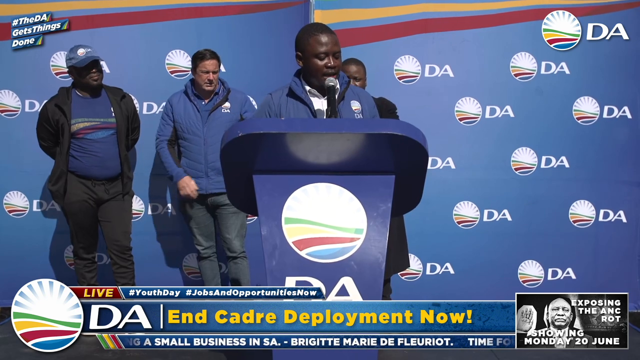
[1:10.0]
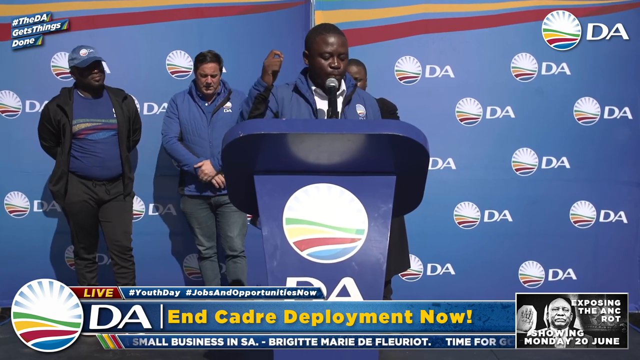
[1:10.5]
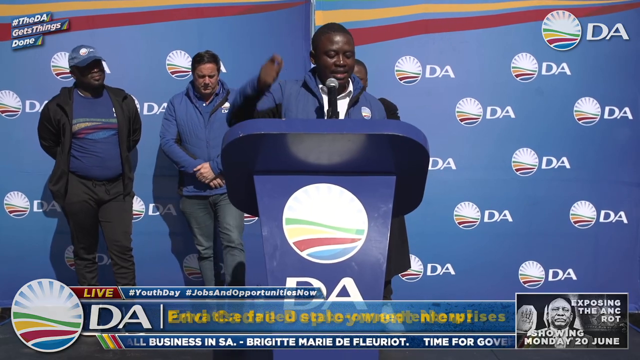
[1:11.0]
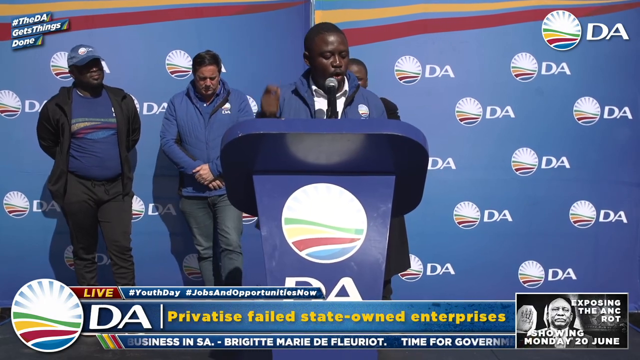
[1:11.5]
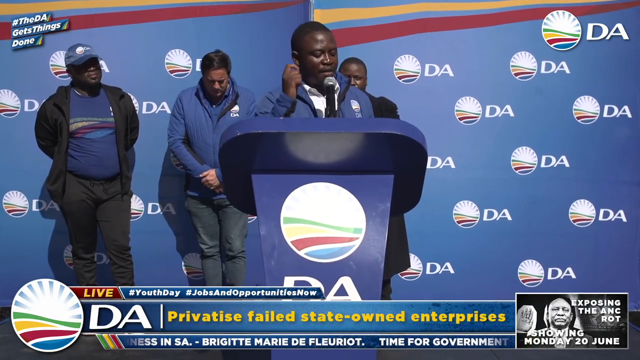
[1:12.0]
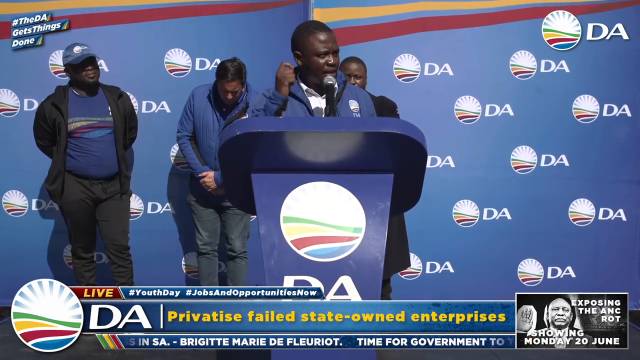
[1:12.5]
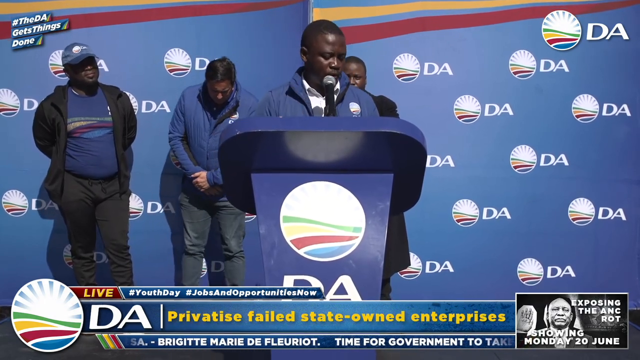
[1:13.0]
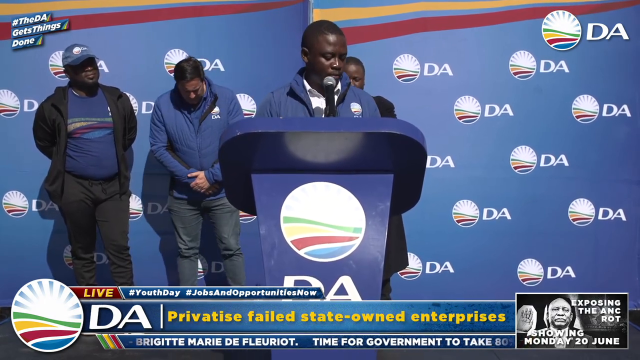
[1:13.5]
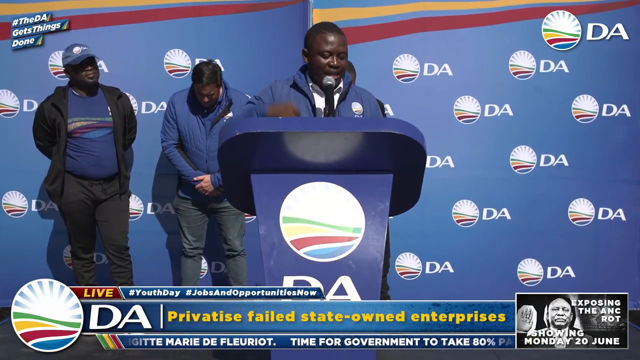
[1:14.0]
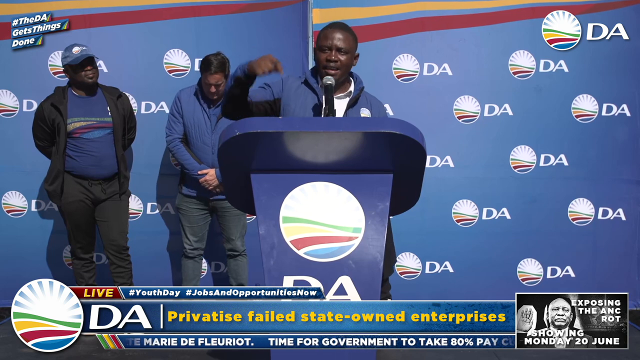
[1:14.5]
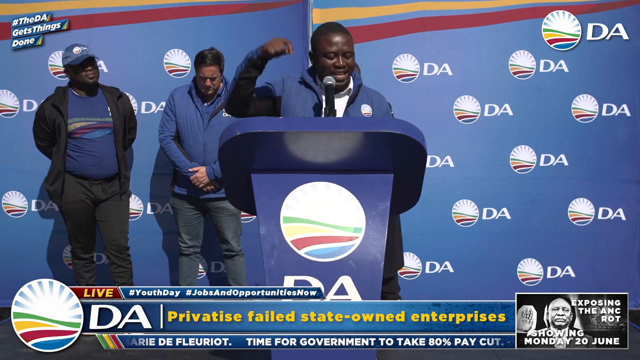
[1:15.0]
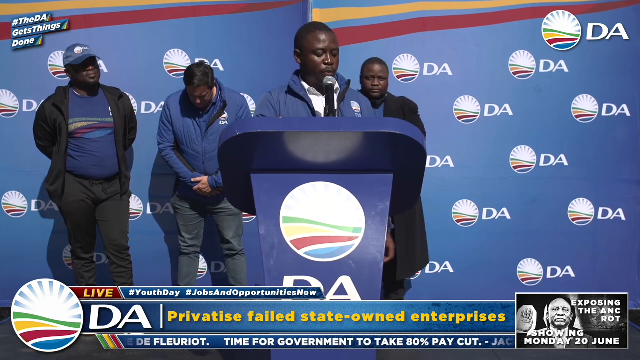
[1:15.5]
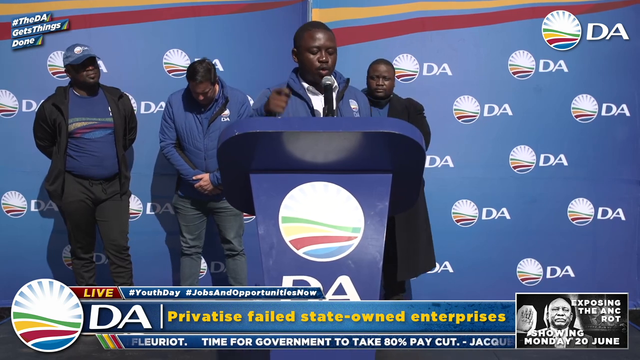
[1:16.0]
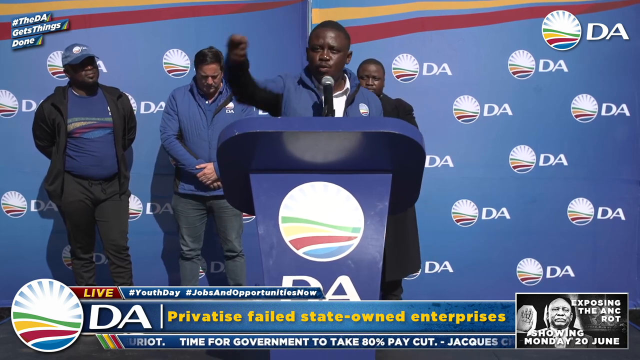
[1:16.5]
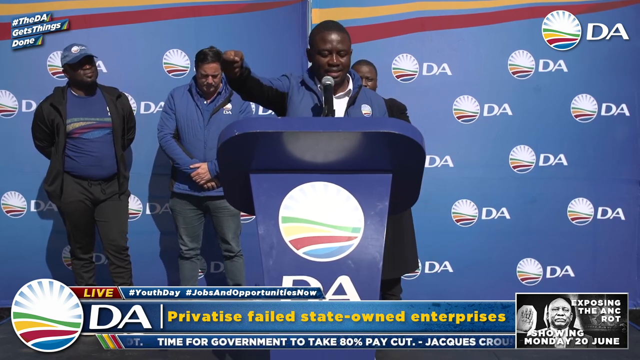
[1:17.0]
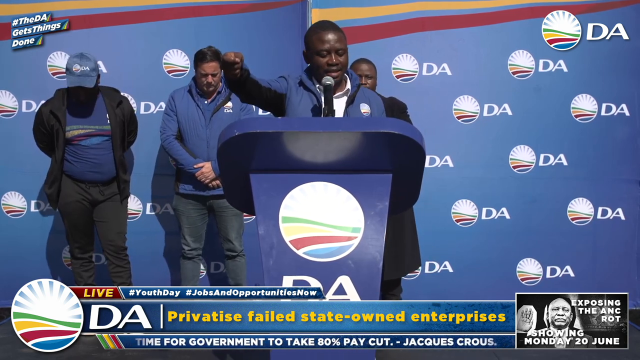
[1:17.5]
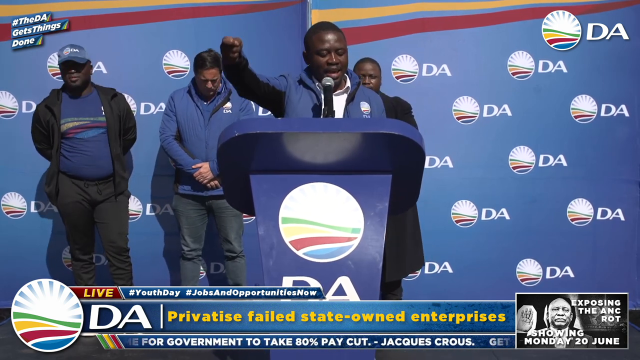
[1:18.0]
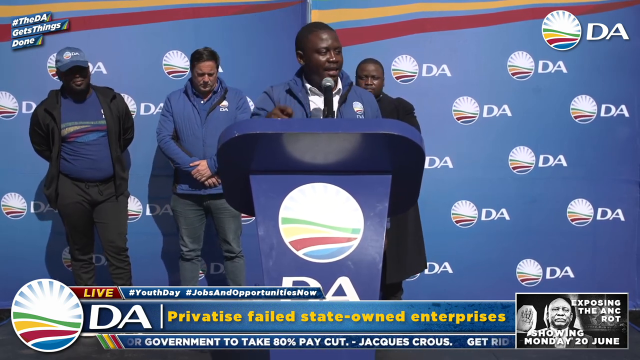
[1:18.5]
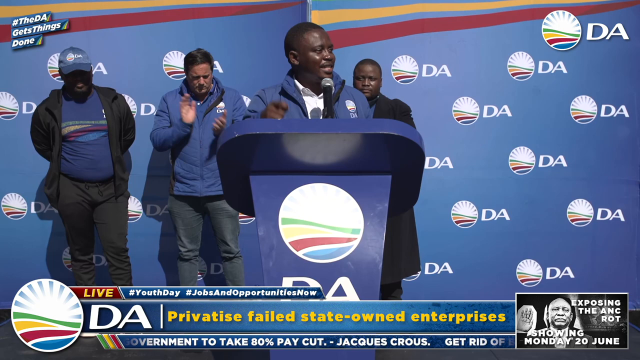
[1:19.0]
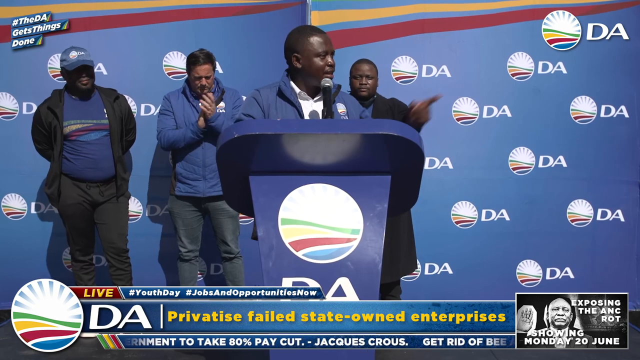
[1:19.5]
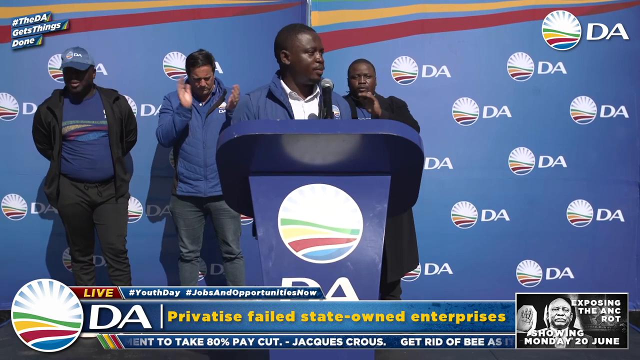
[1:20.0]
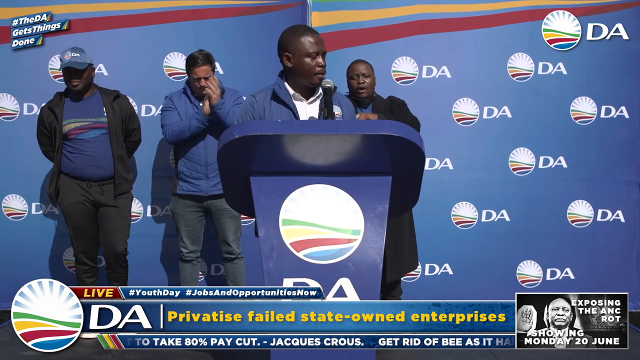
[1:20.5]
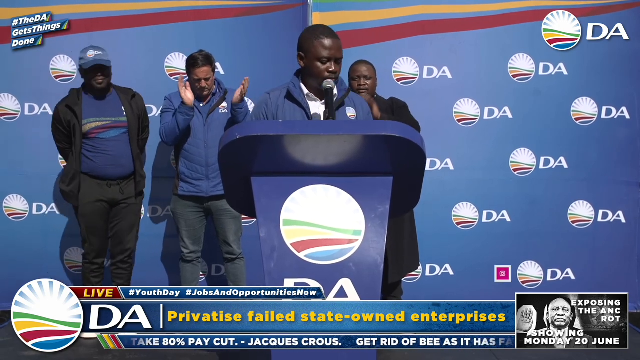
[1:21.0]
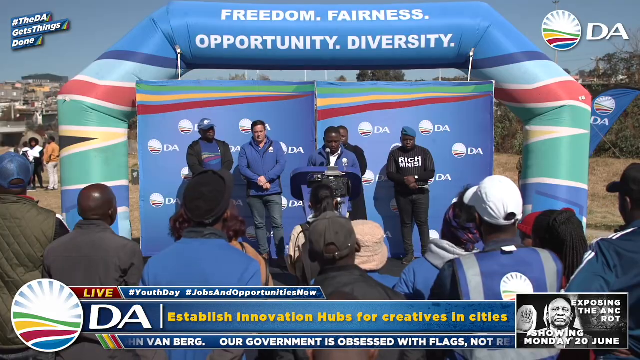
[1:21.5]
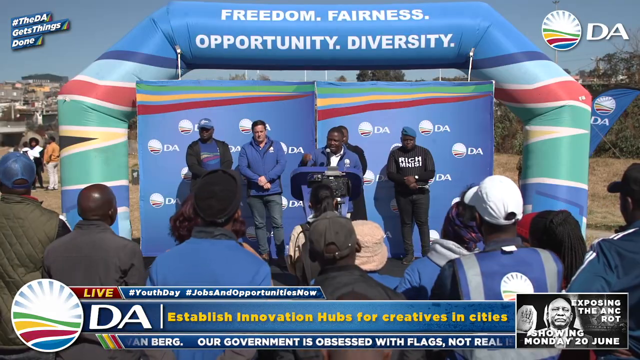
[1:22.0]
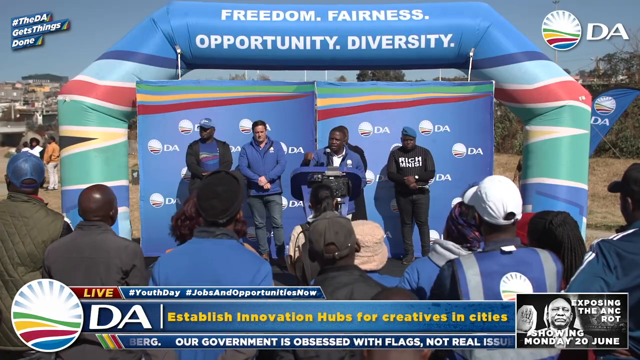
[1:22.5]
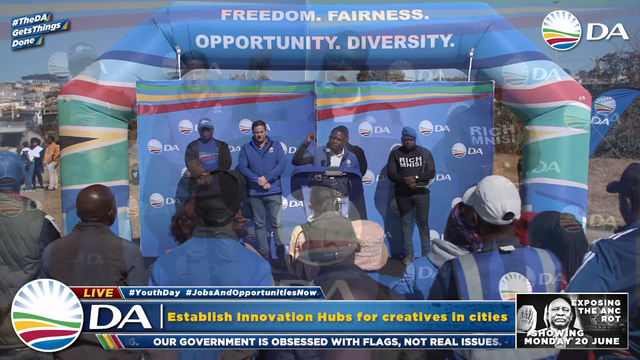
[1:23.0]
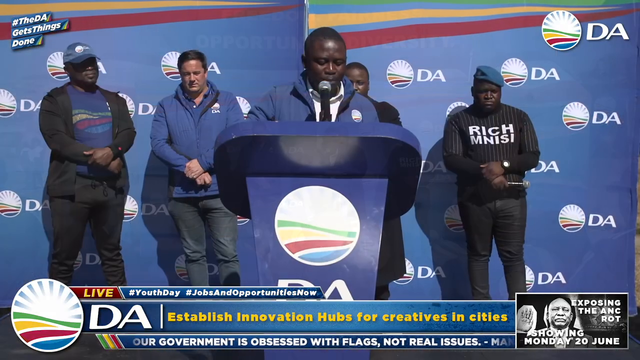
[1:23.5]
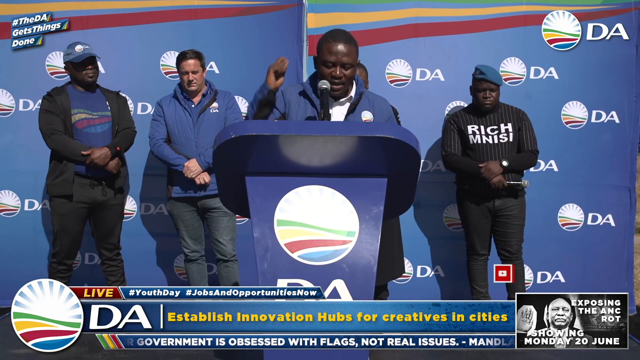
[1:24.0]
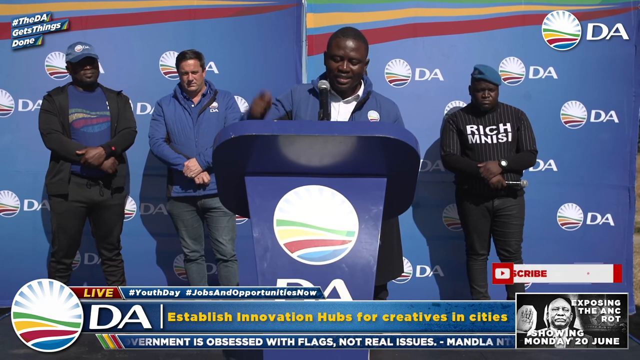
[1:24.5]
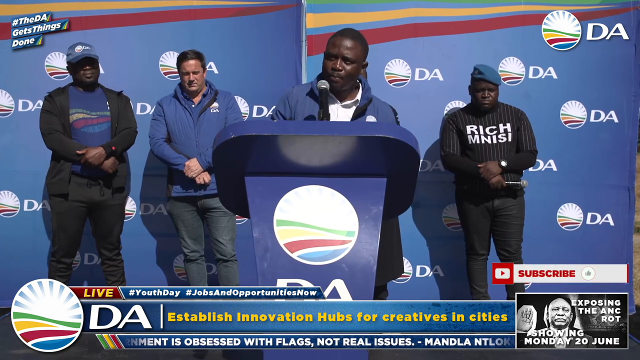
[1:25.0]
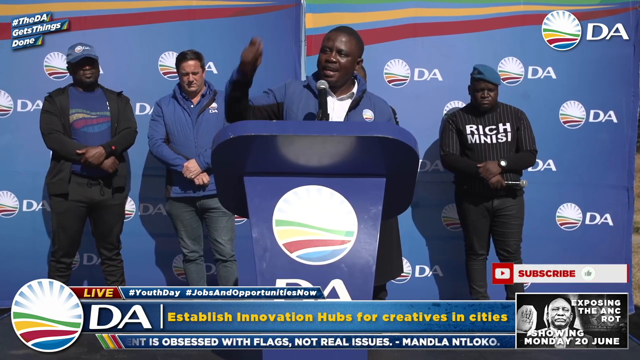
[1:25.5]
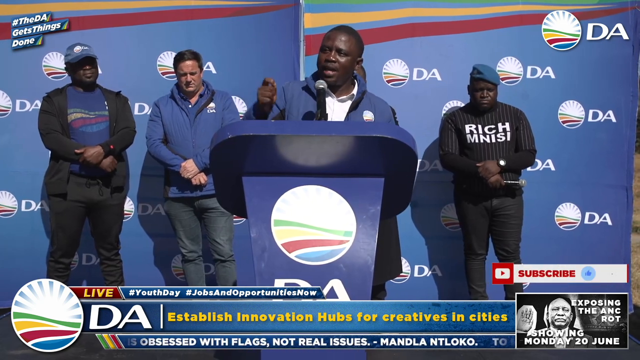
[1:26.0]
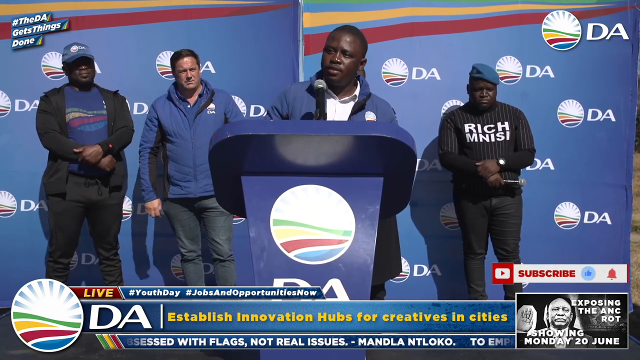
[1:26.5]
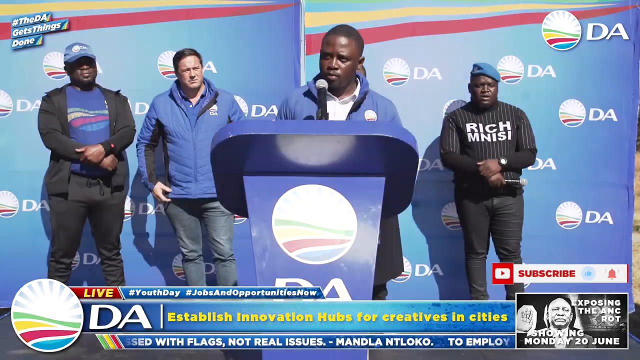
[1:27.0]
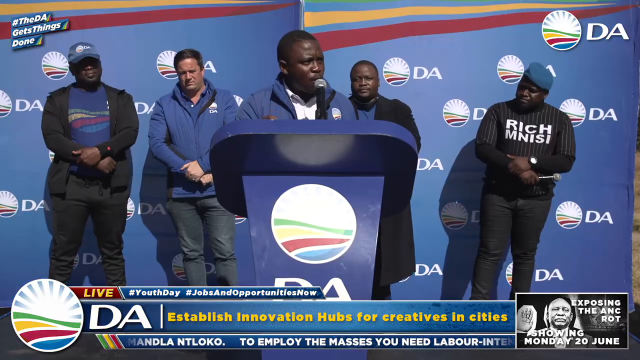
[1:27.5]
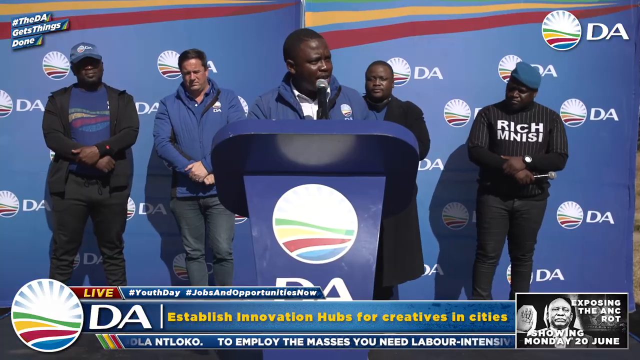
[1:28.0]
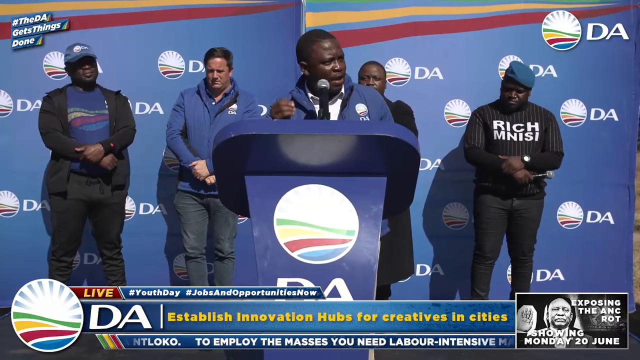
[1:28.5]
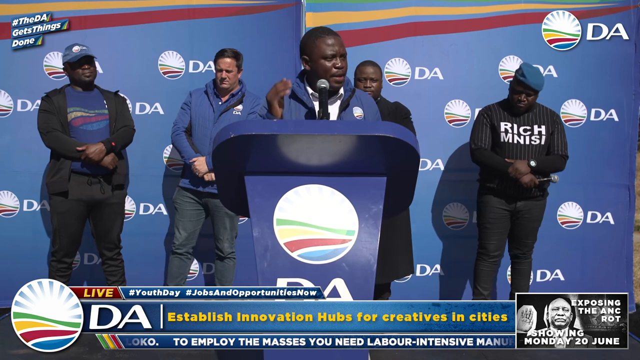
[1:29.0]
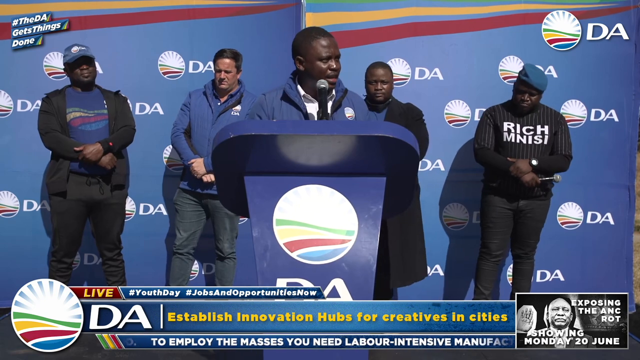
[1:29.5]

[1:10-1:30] The banner at the bottom changes to "privatize failed state-owned enterprises." The man at the podium points toward the audience. A quick wide shot shows the audience, several of whom seem to be wearing the same blue that seems to be part of the DA organization. The podium area is mostly covered, but behind it are some other people and some houses in the background. The text changes to "establish innovation hubs for creatives in cities." Above the black-and-white photo a YouTube link pops up, and there is also a Twitter link. The quotes underneath the banner also change and seem to correspond to the larger text, but they move quite fast and are difficult to read fully.